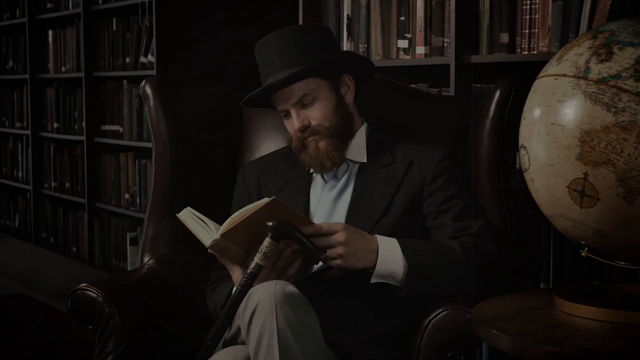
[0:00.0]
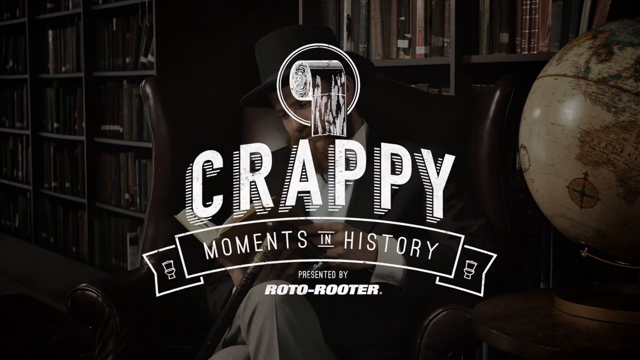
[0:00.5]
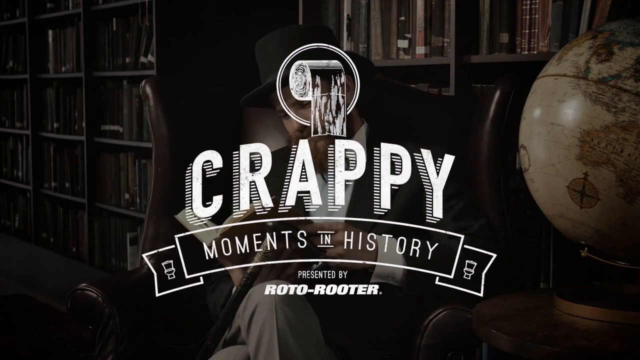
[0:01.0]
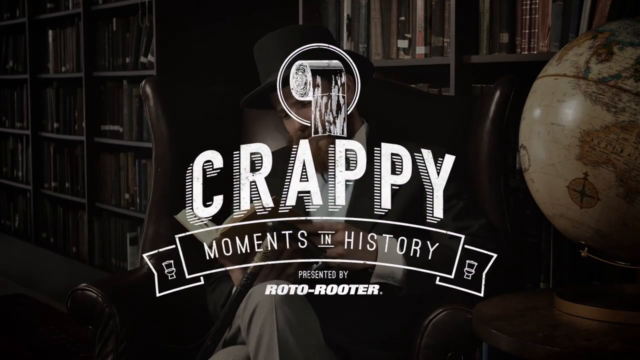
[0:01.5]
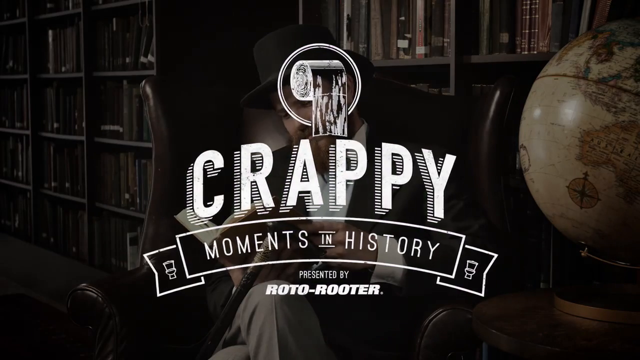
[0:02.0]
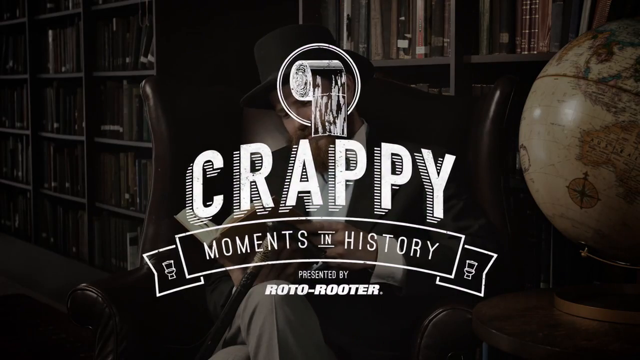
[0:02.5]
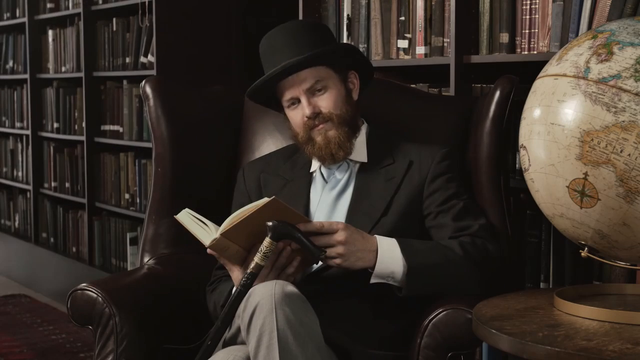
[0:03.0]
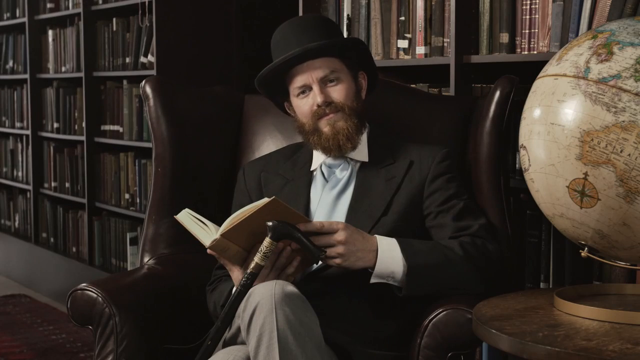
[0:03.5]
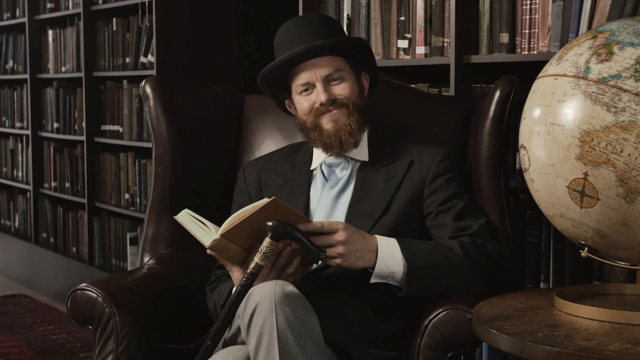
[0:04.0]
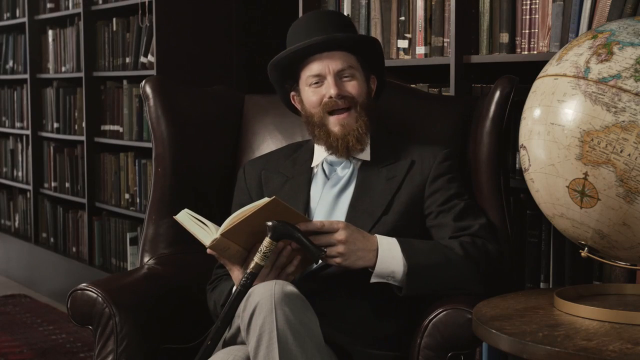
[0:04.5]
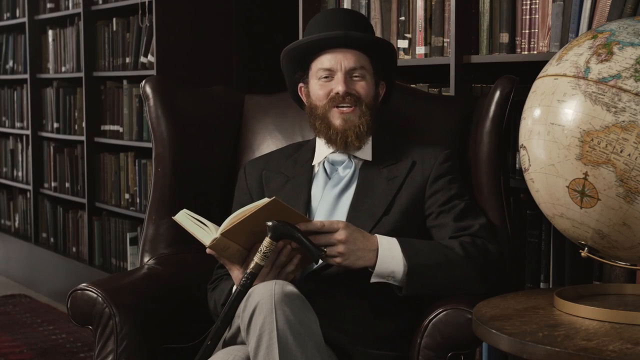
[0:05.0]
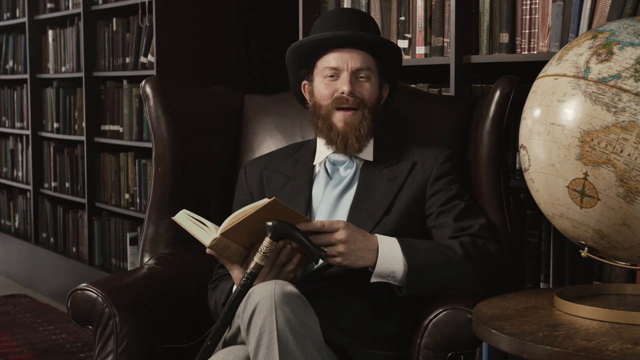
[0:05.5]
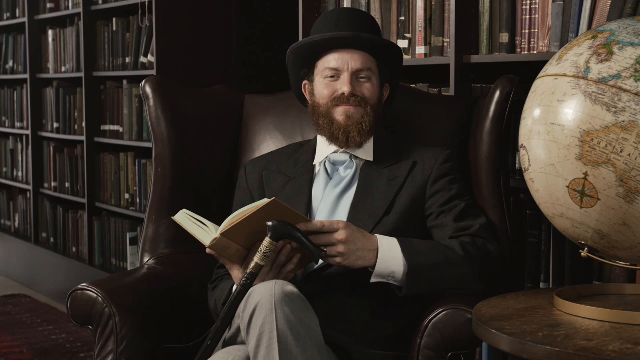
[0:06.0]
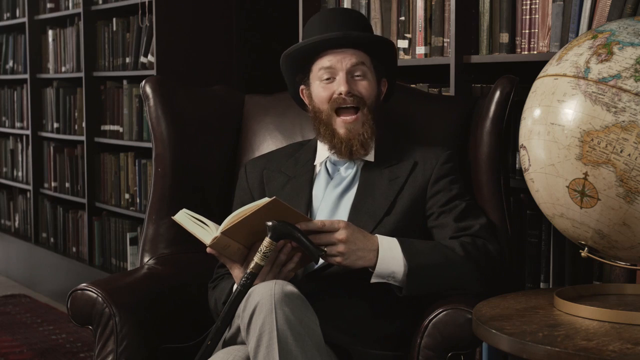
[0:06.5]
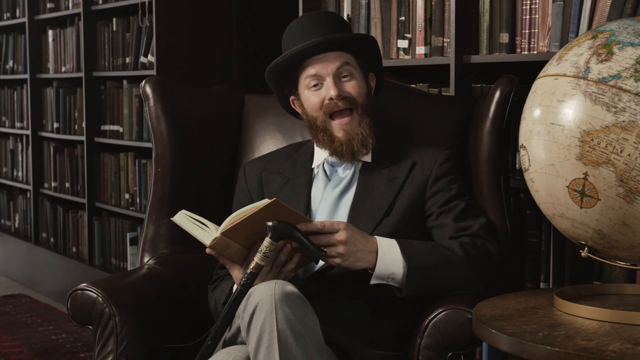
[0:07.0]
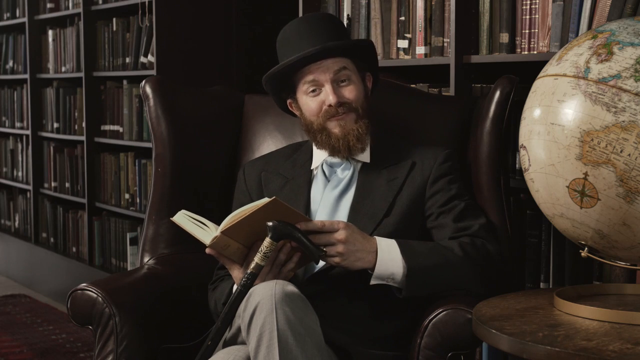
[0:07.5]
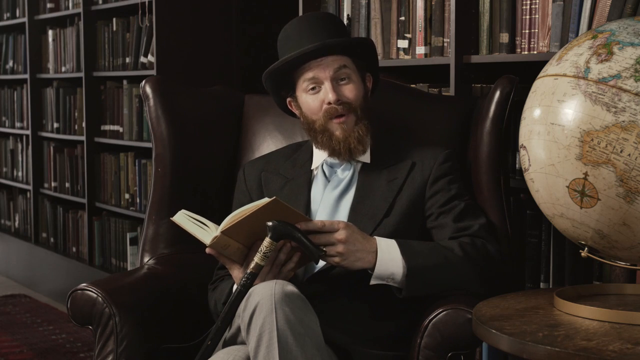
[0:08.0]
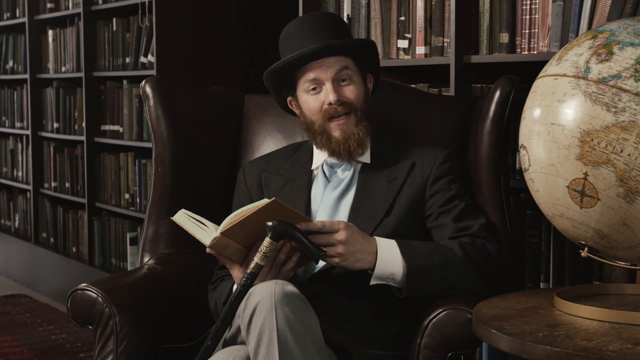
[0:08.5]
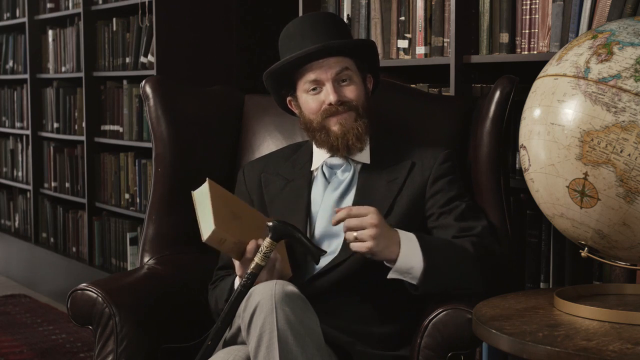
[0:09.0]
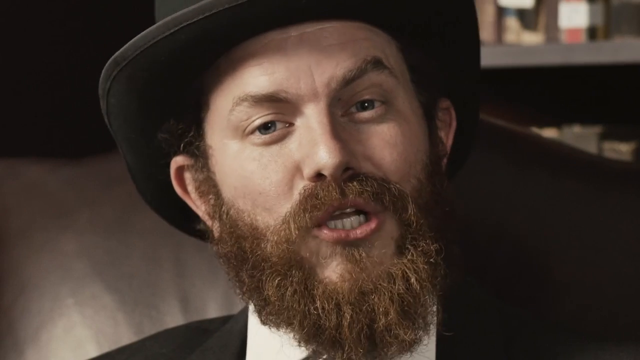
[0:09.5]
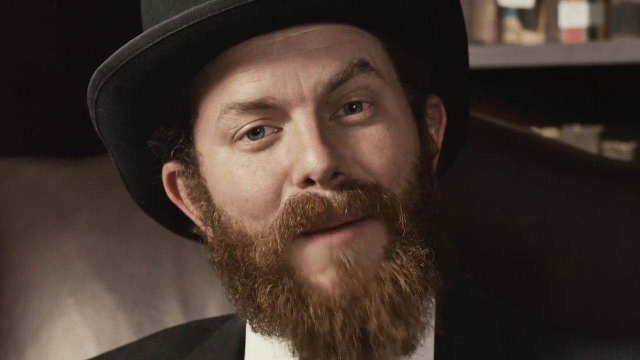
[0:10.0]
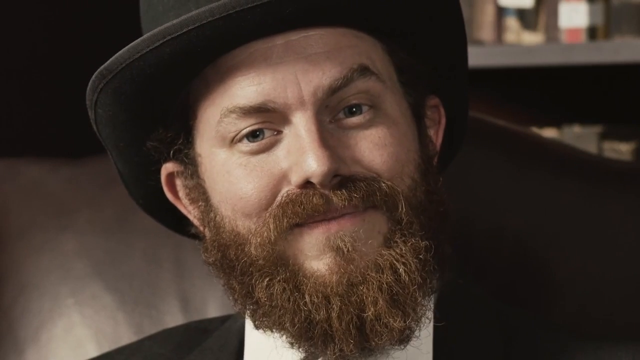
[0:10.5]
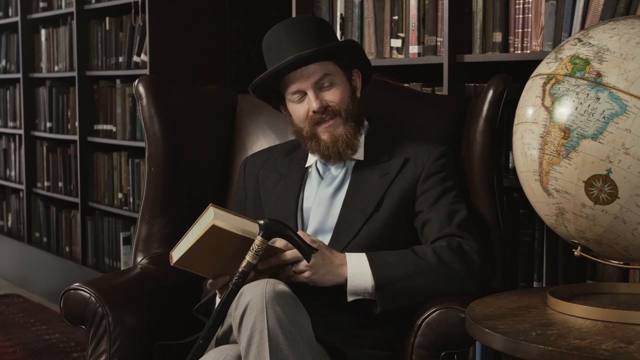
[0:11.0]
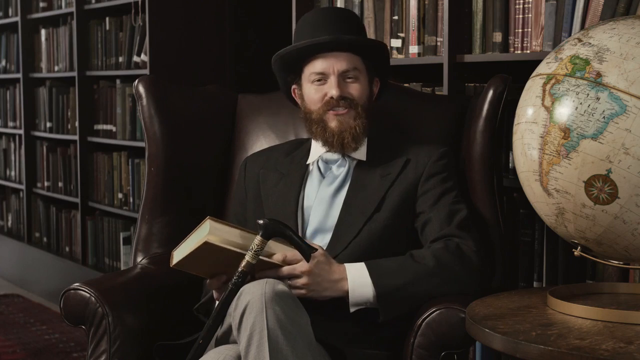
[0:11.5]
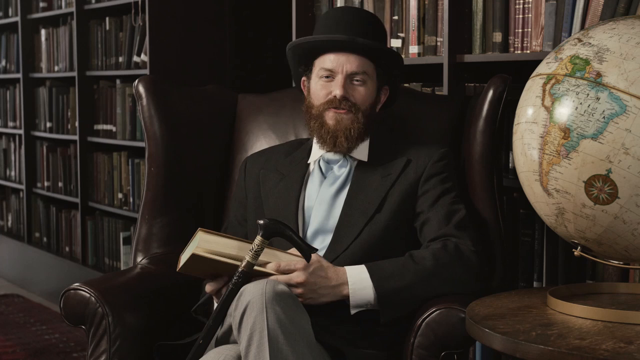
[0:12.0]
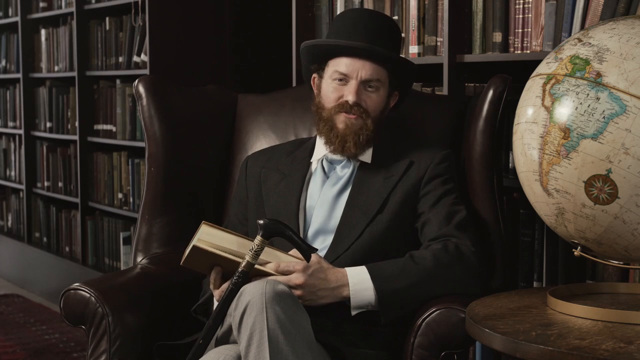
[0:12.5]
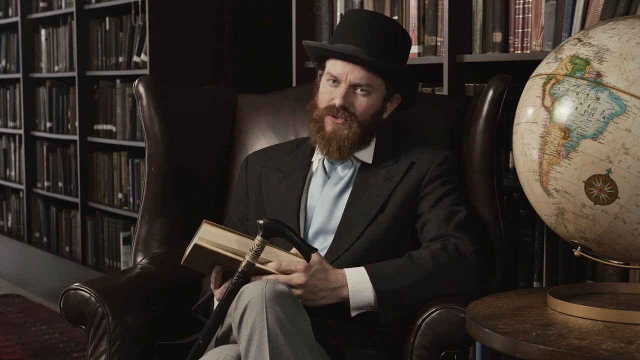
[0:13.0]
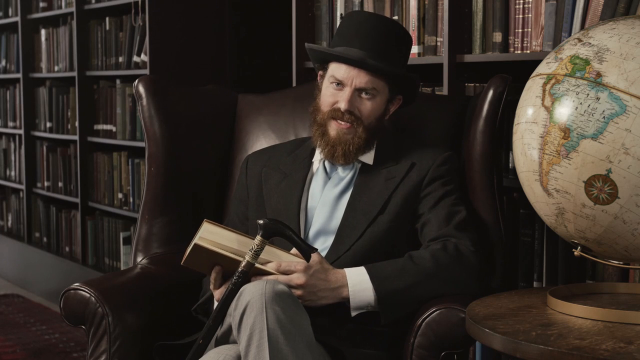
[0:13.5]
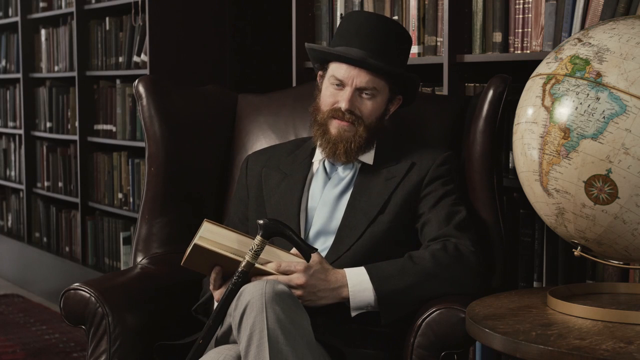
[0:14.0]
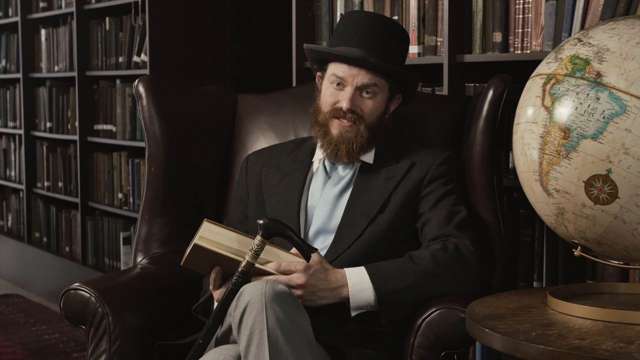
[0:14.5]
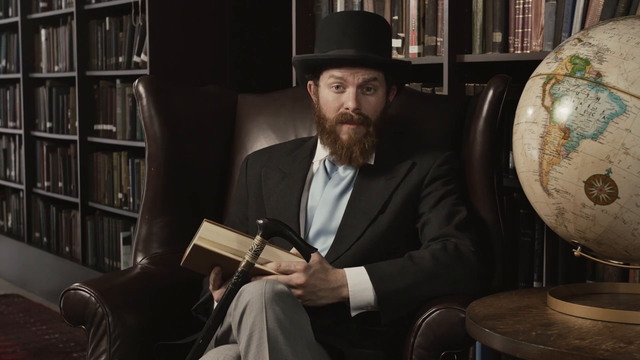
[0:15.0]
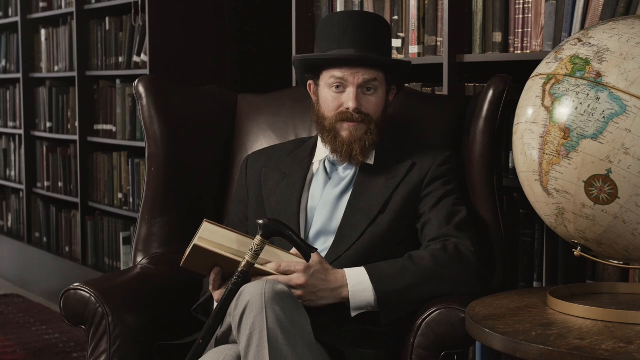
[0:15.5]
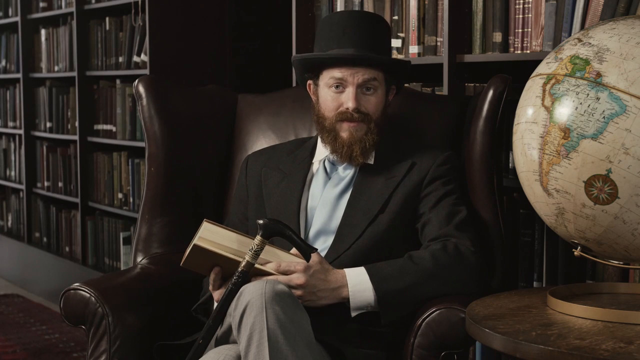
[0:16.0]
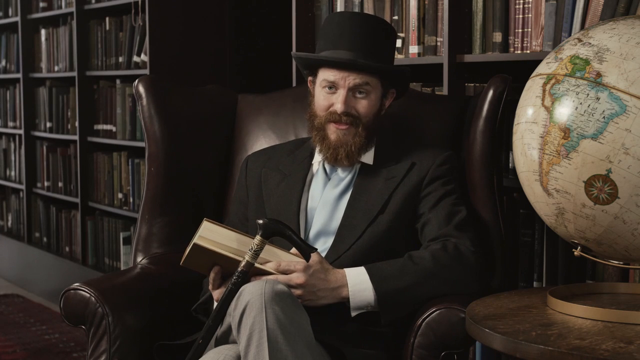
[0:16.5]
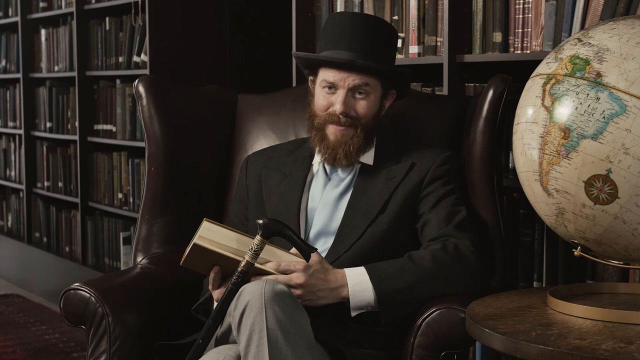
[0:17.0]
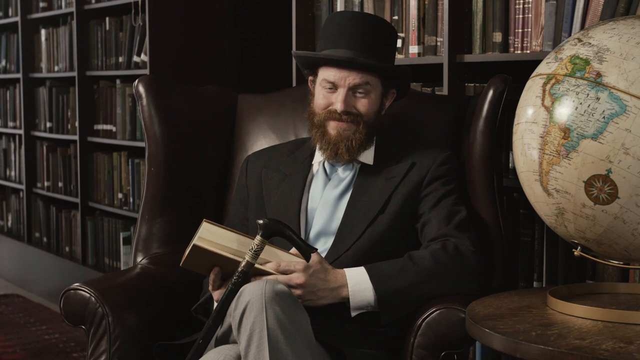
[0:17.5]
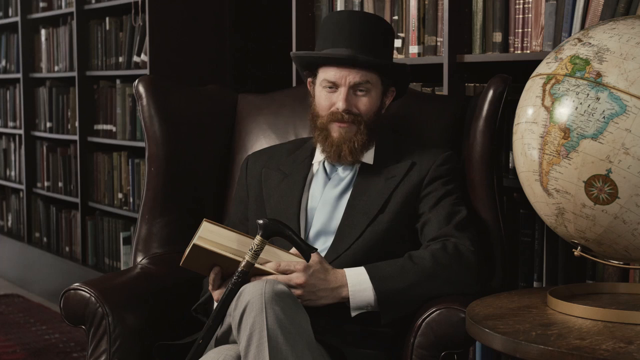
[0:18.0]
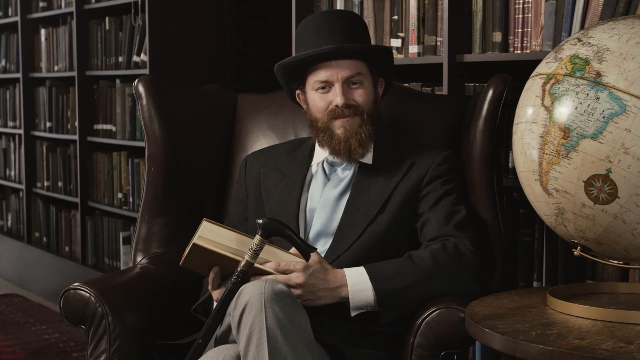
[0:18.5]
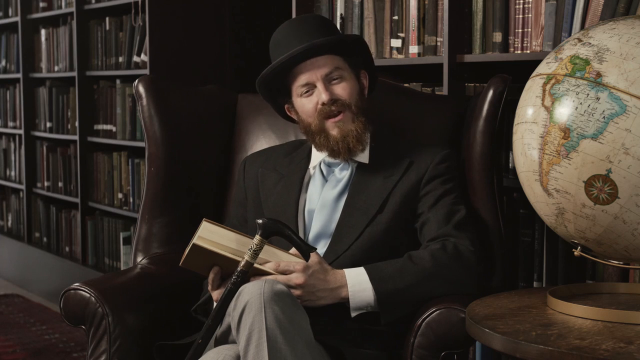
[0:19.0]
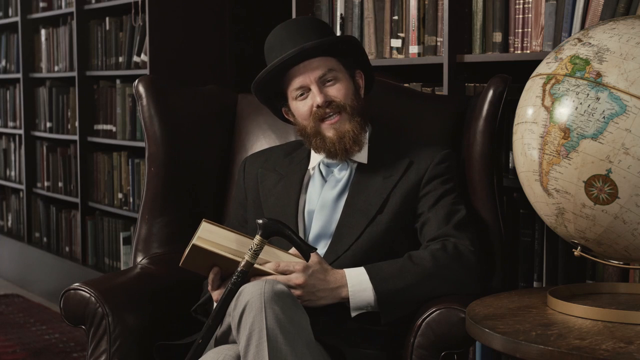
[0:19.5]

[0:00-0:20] A globe is to the right, and a chair is at the center. A man in a suit and a bowler hat is sitting in the chair. A logo appears at the center: at the top is a circle with what appears to be toilet paper inside it, below it is "crappy," then "moments in history," and further below "presented by Roto-Rooter." The logo lingers and then transitions away. The man turns to look forward, smiling; he has a scruffy beard. He grins, his eyes showing kindness, and talks as his head levels and then angles to the left. With raised eyebrows he keeps speaking and closes the book in his right hand. A close-up shows his face as he continues to speak, and he then smiles without showing teeth.